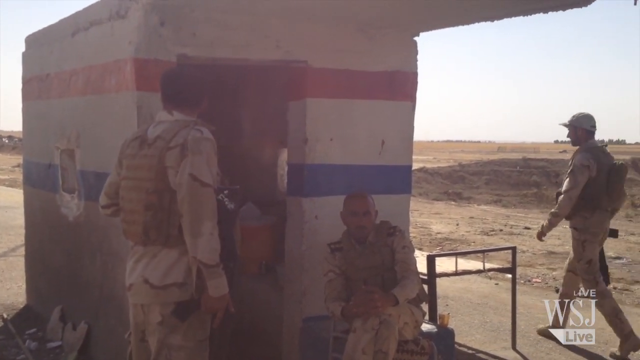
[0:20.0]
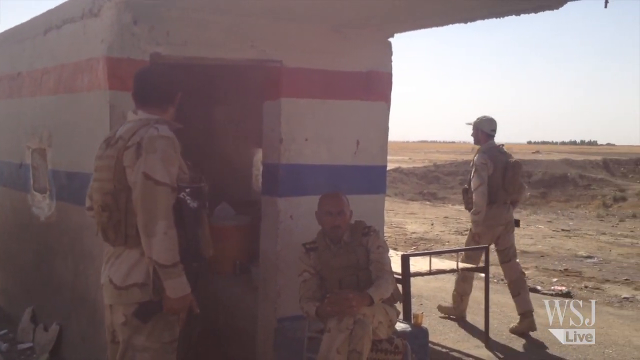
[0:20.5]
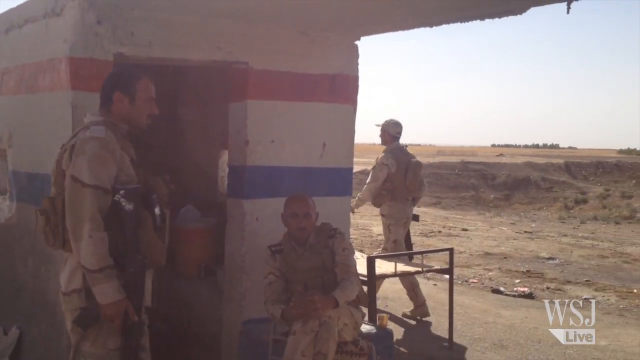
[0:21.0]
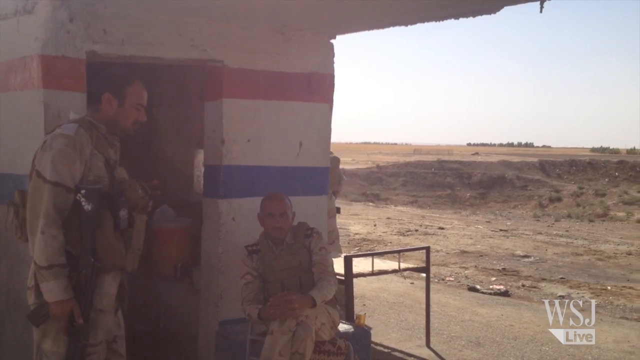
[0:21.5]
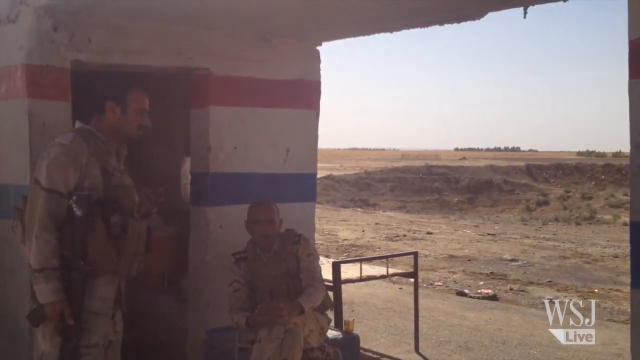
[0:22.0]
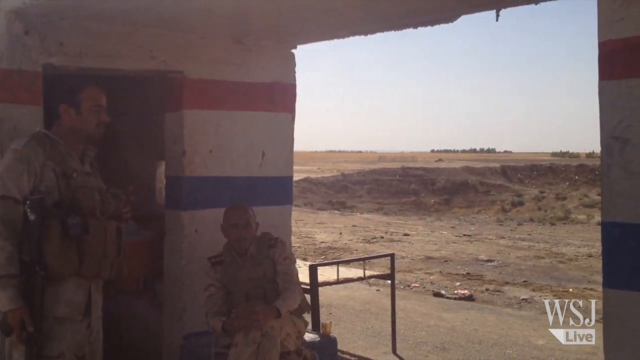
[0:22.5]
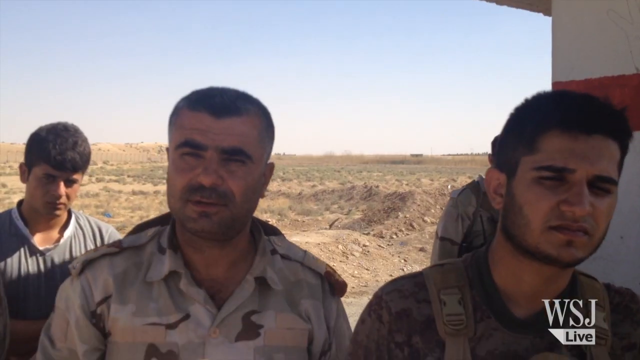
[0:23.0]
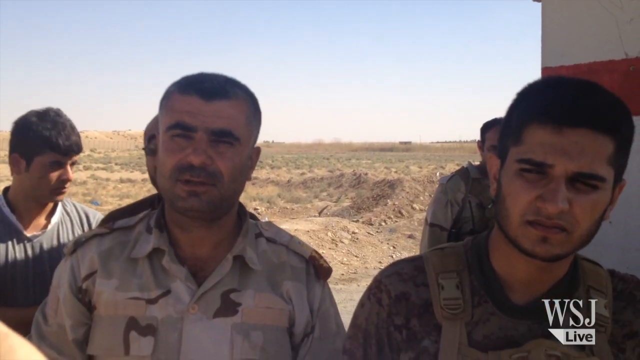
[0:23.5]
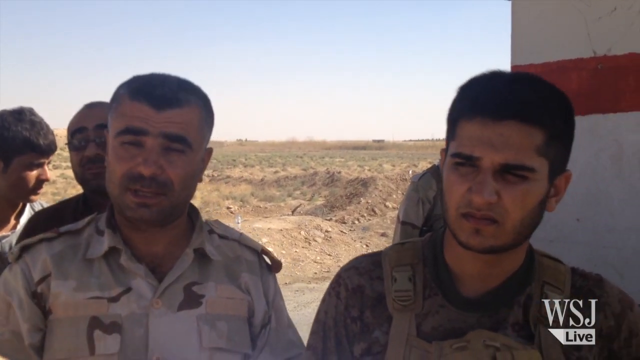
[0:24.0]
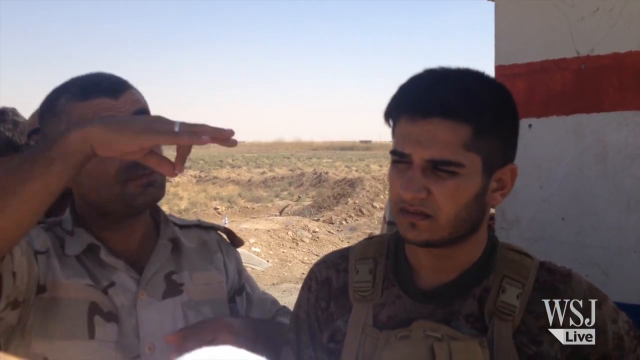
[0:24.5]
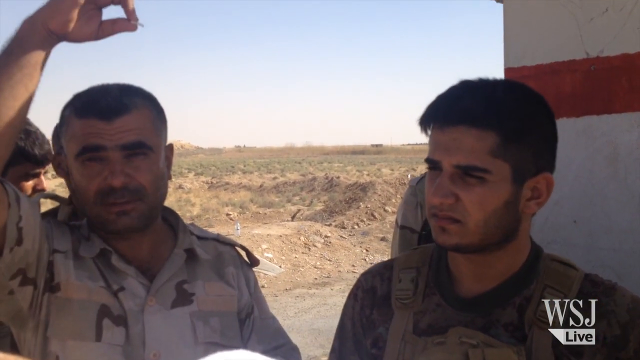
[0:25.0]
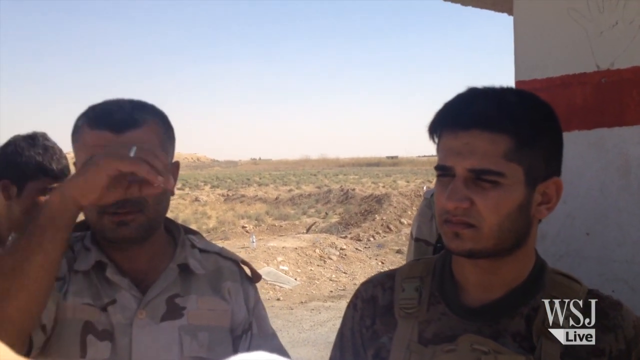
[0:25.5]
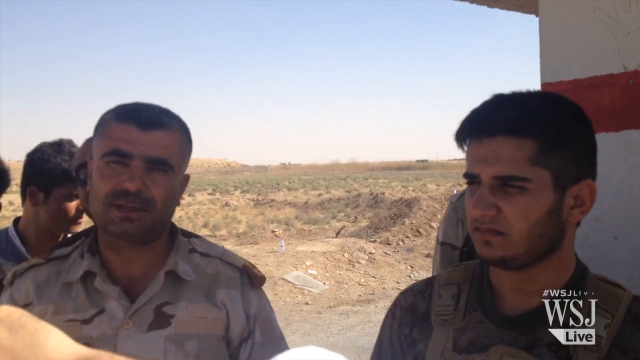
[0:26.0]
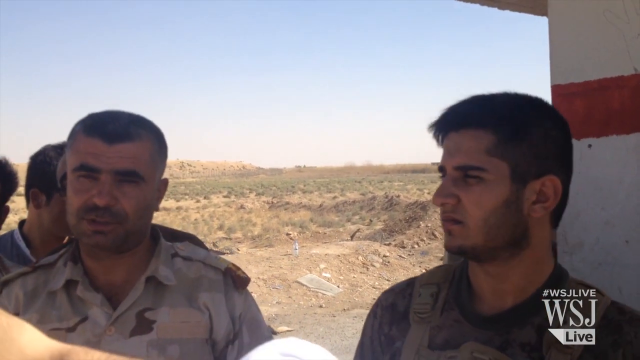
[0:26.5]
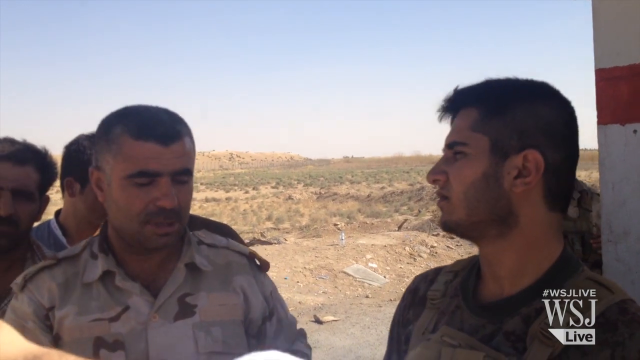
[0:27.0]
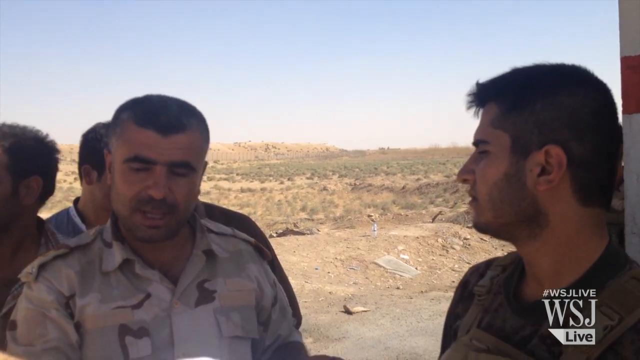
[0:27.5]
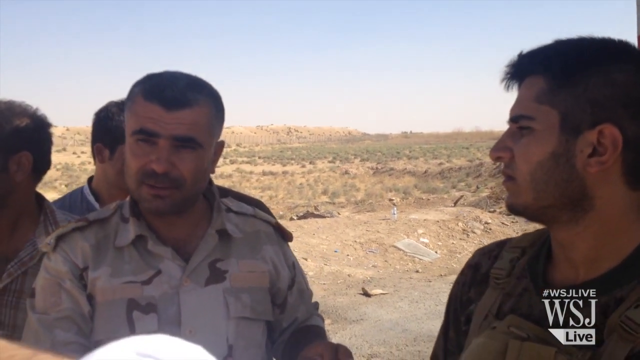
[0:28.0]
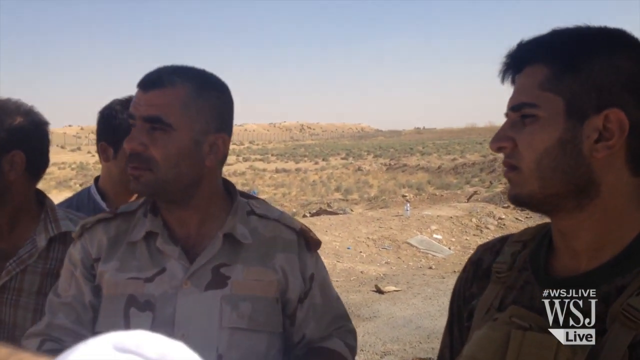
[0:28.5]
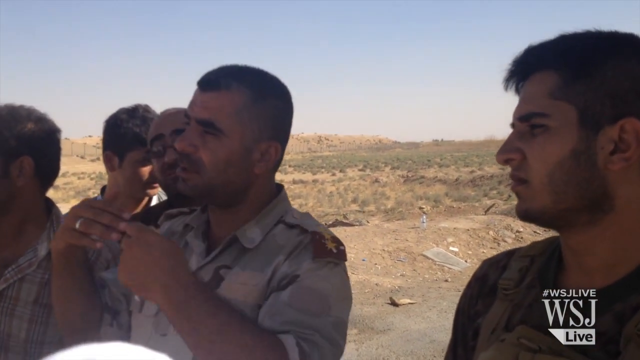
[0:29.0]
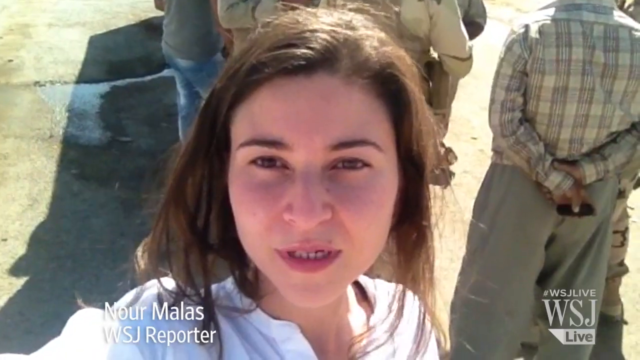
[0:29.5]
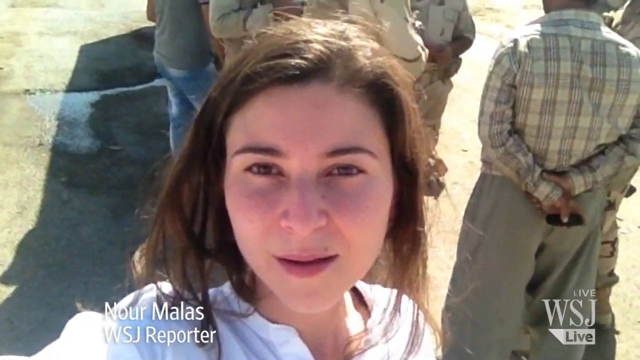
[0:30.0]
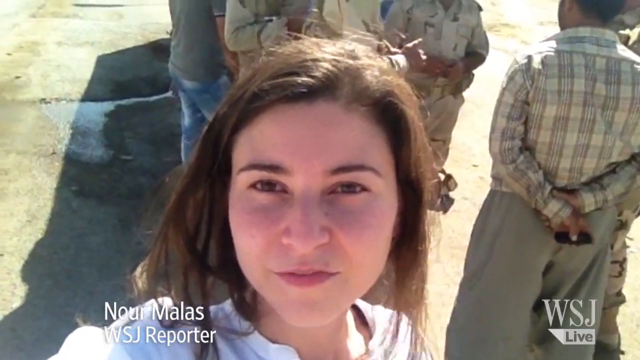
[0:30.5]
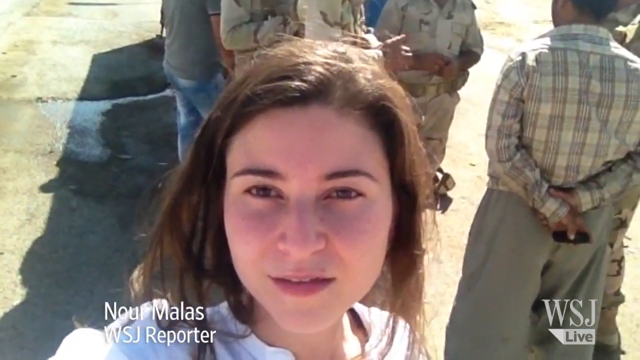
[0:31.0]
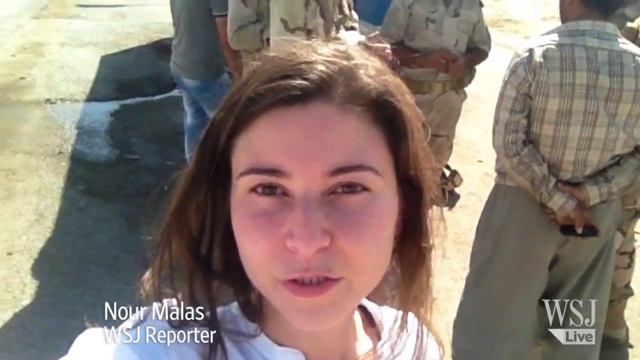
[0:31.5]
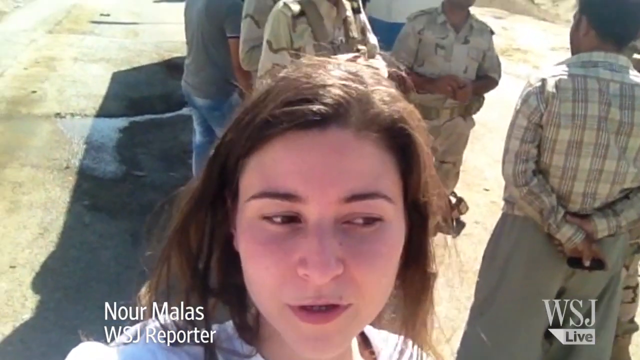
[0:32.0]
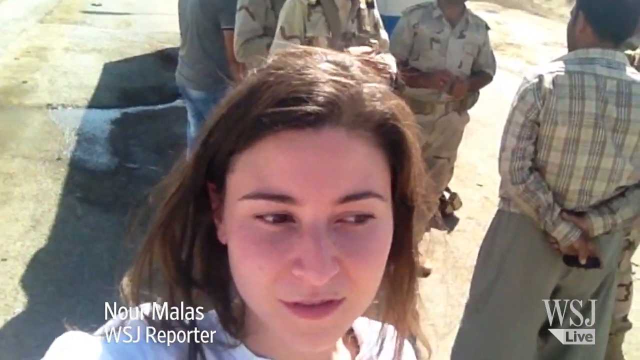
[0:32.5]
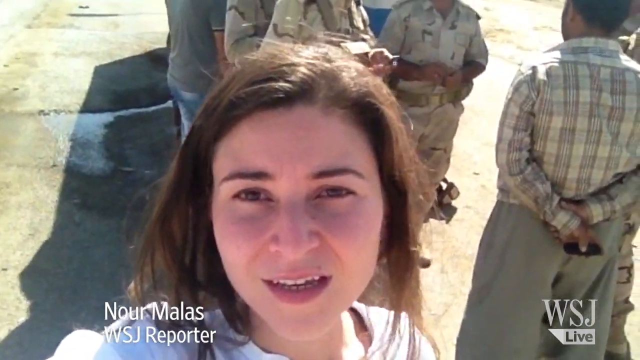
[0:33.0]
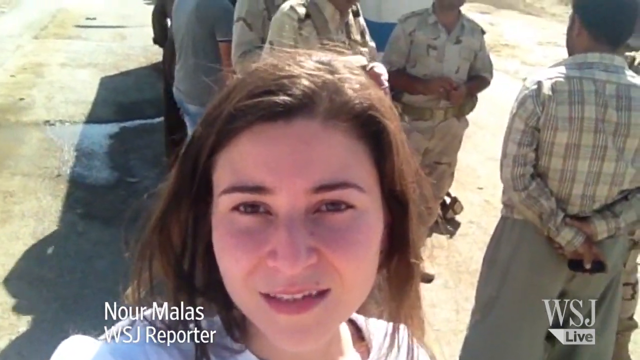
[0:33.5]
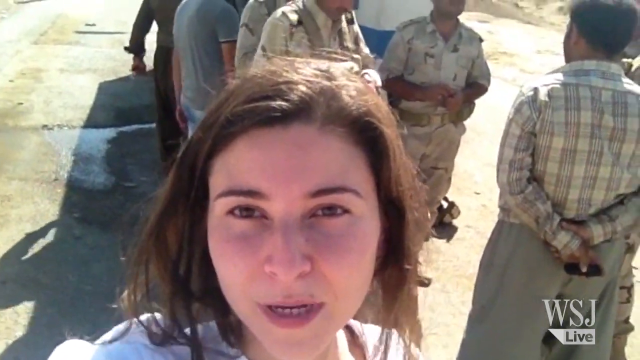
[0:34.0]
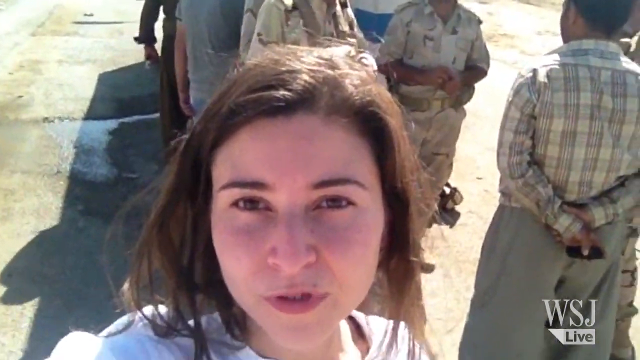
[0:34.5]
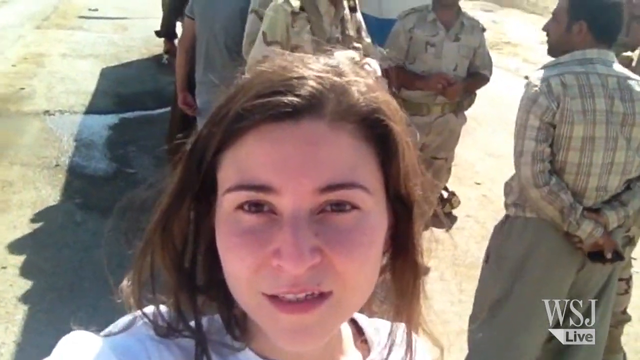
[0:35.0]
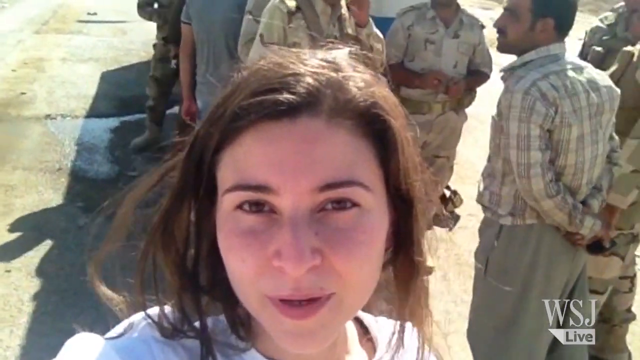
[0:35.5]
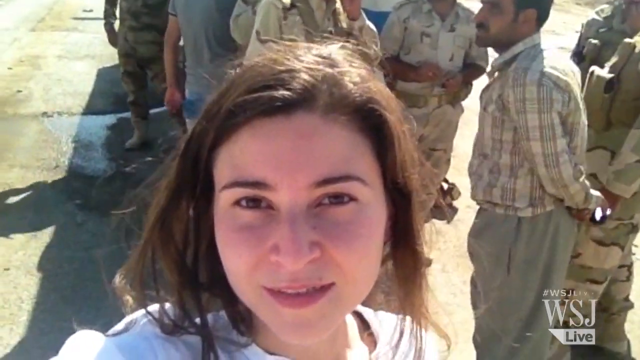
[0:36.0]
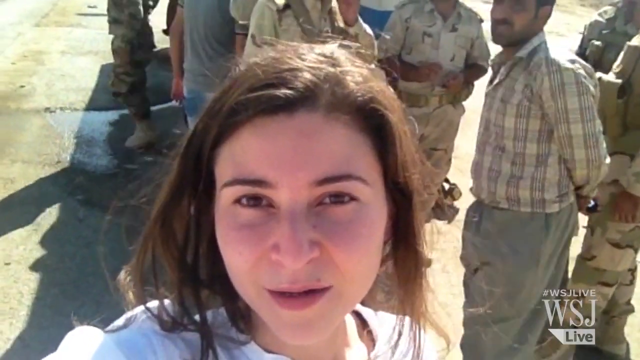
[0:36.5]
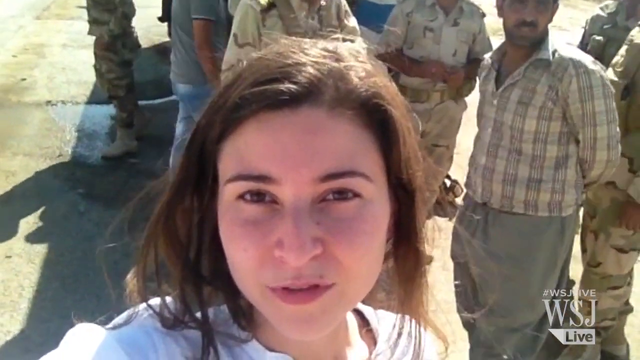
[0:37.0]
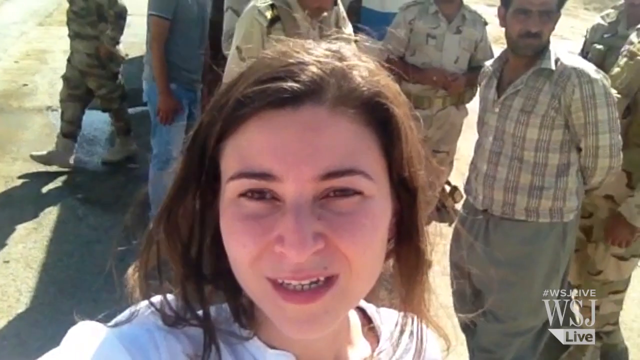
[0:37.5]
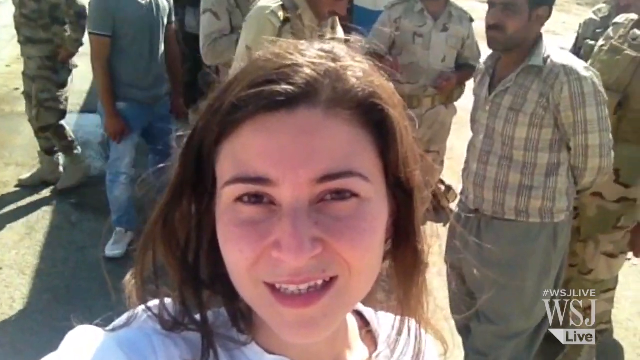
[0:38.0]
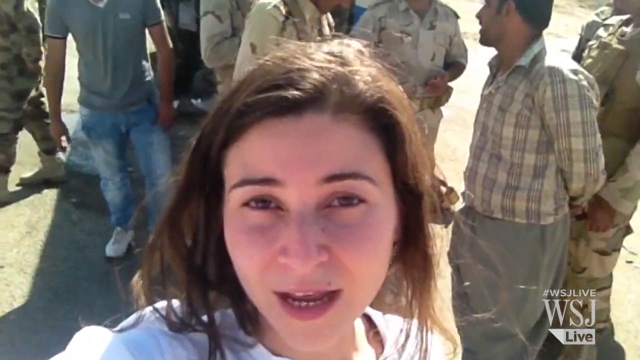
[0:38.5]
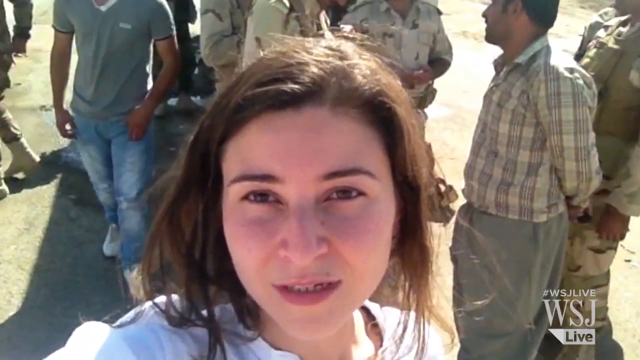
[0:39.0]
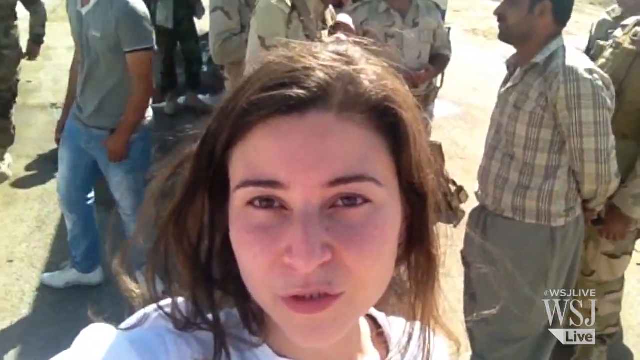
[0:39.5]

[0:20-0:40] A very small building on the left takes up about two thirds of the width and nearly the full height of the frame. The wall closest to the camera is only about double the width of the doorway, which is just a hole in the wall. The building seems to be made of cement, possibly, and is white with a red stripe running near the top of the doorway and a blue stripe about halfway down. In front of the building are two men. One, bald with darker skin, squats in the center wearing what looks like a green bulletproof vest. Another man in the same attire walks past the left side, facing right. A third man in very similar attire is a little further back on the right, looking as if he is walking to go behind the building, to the left and into the distance.